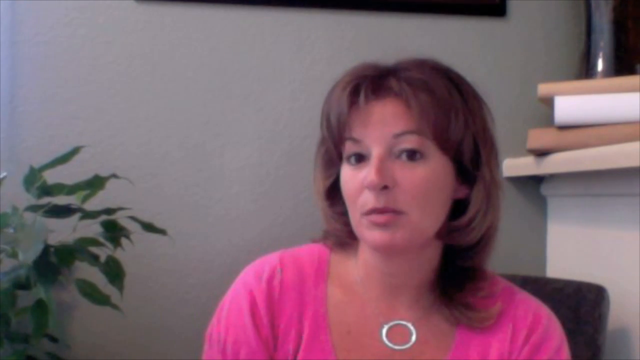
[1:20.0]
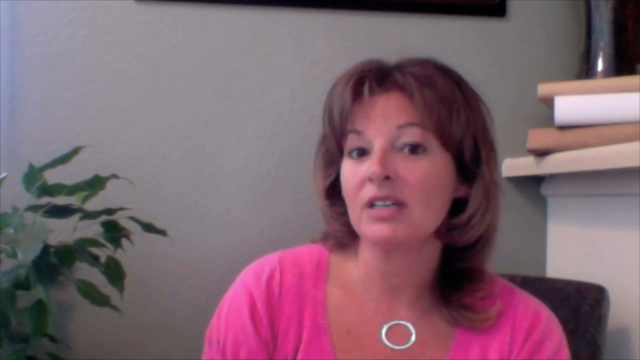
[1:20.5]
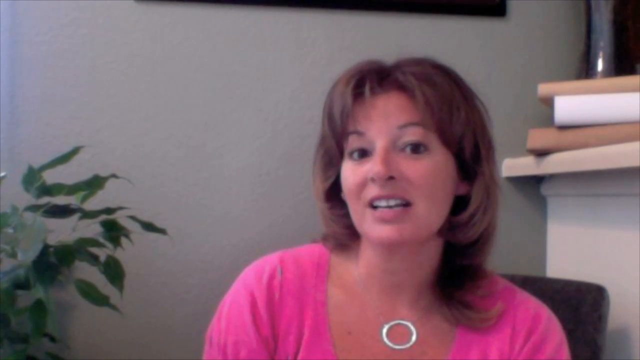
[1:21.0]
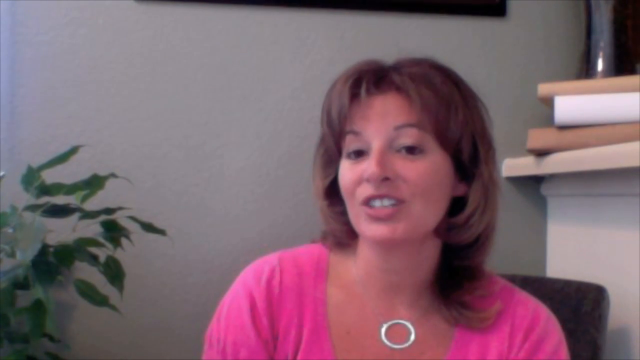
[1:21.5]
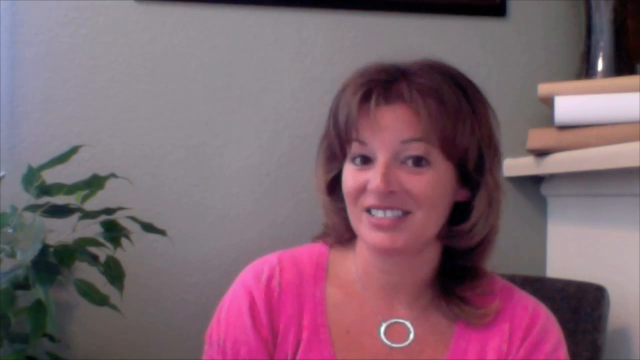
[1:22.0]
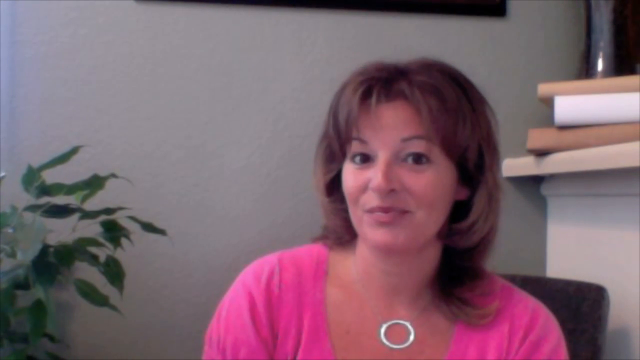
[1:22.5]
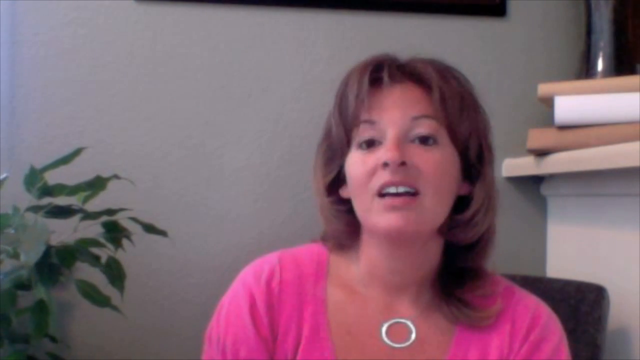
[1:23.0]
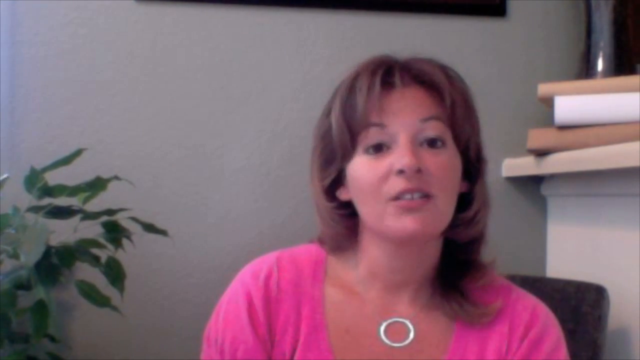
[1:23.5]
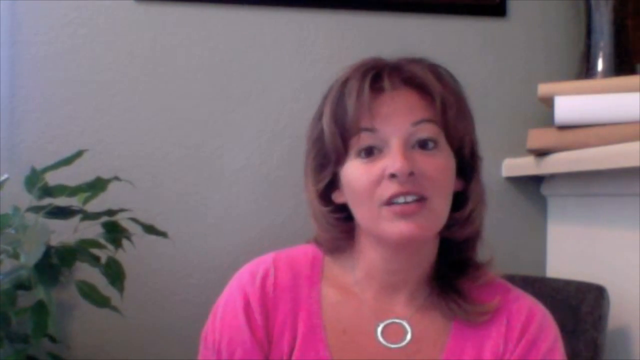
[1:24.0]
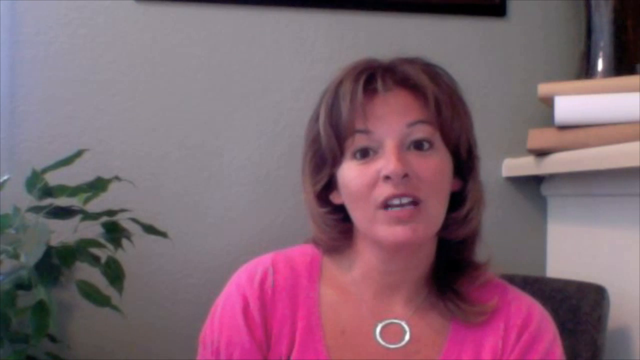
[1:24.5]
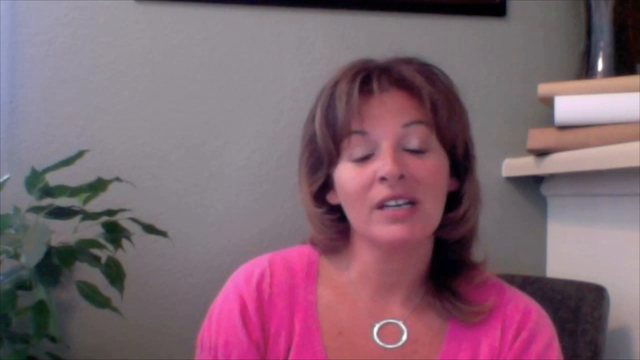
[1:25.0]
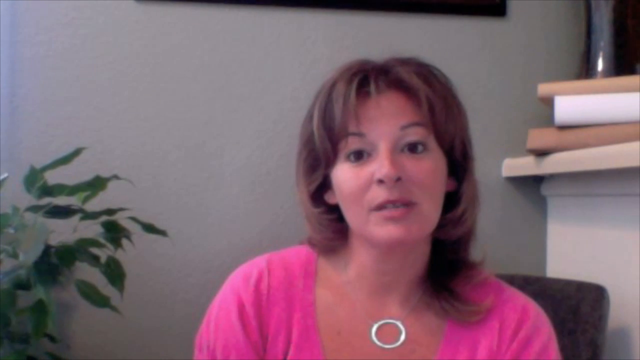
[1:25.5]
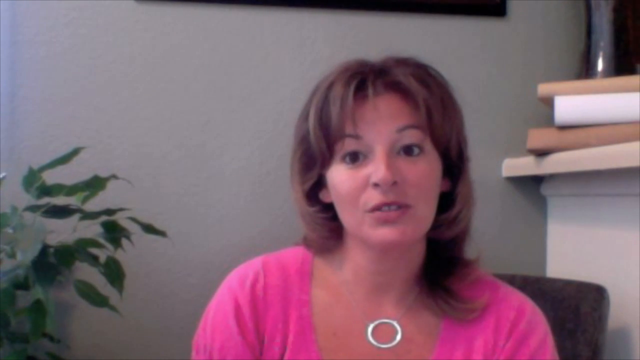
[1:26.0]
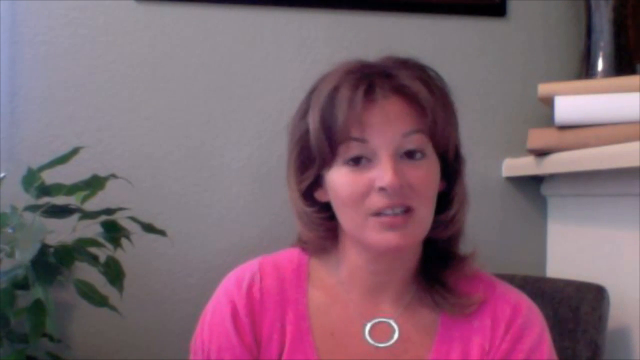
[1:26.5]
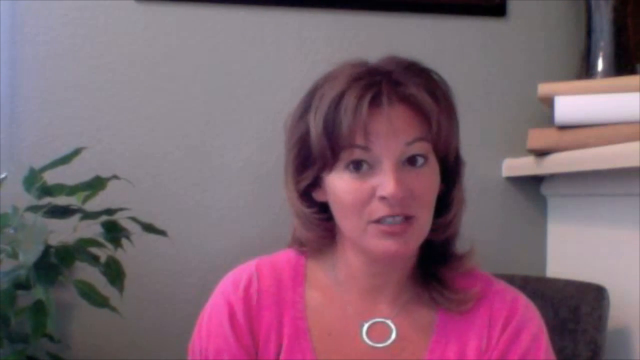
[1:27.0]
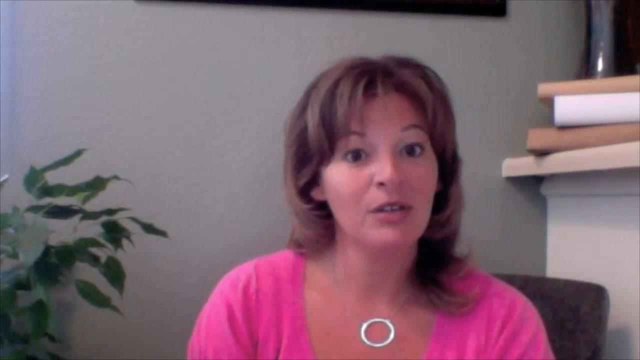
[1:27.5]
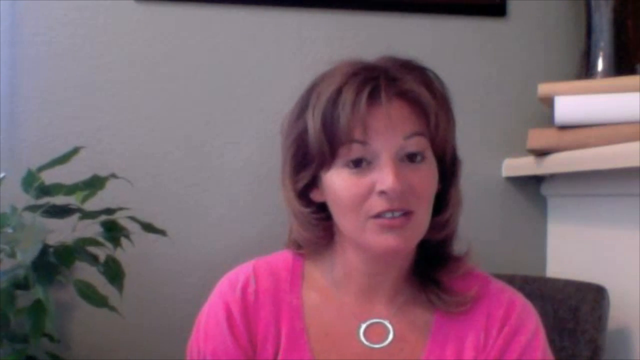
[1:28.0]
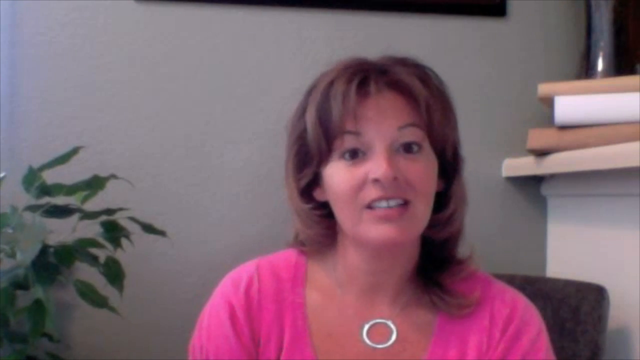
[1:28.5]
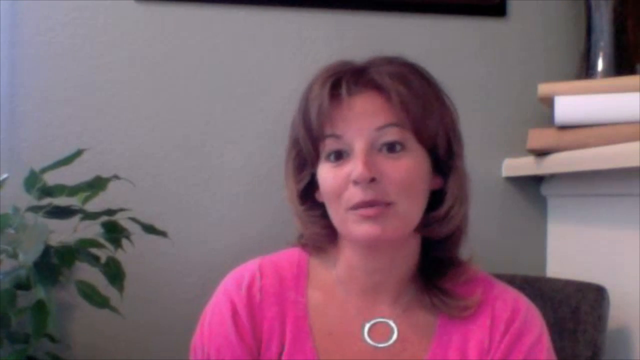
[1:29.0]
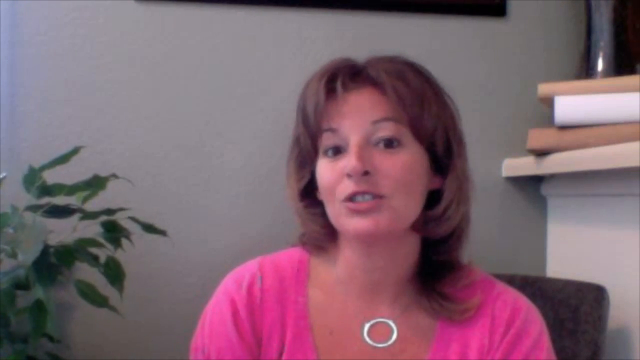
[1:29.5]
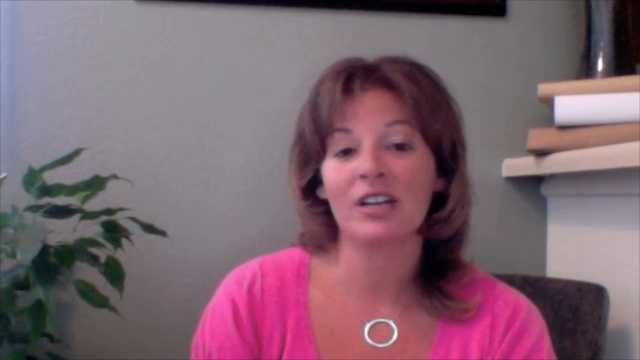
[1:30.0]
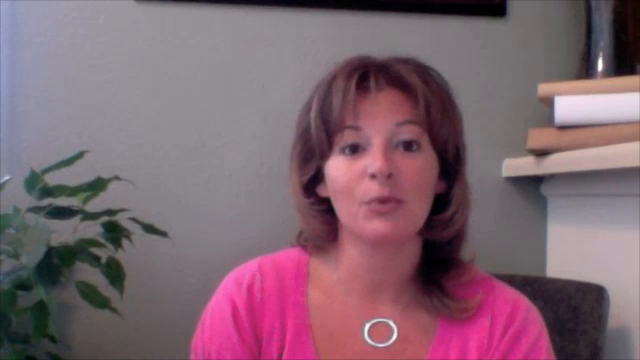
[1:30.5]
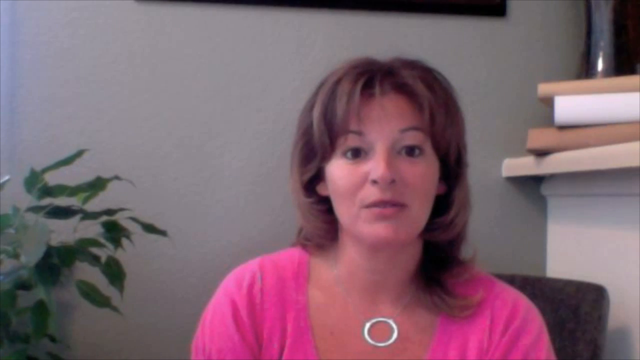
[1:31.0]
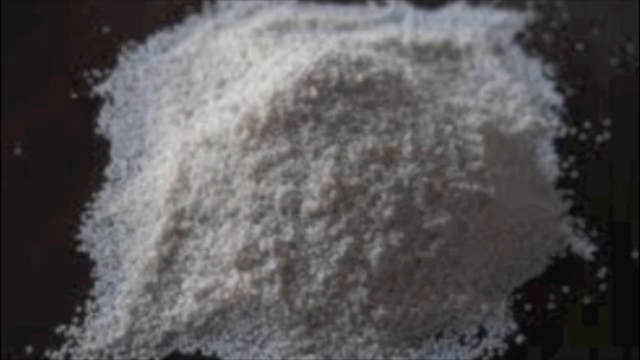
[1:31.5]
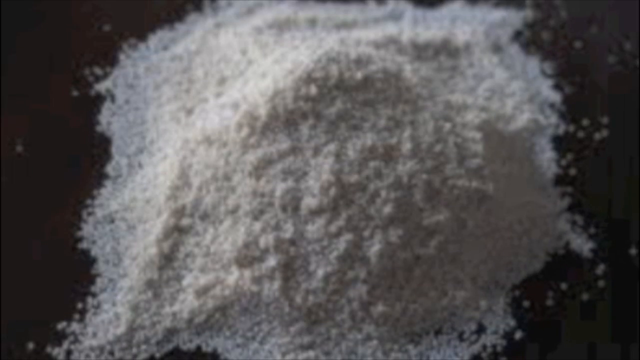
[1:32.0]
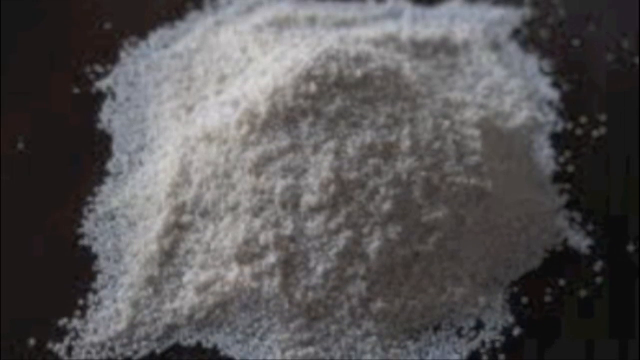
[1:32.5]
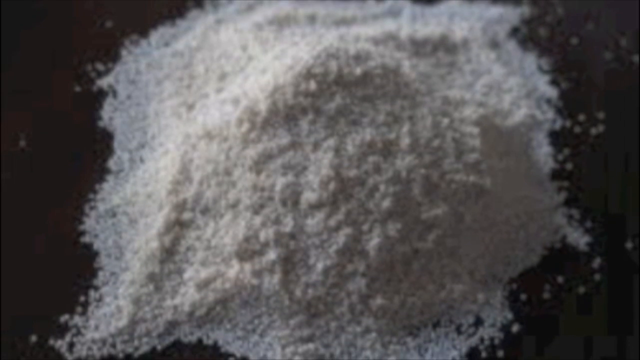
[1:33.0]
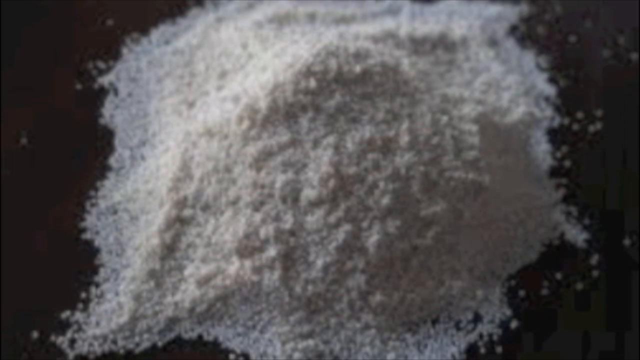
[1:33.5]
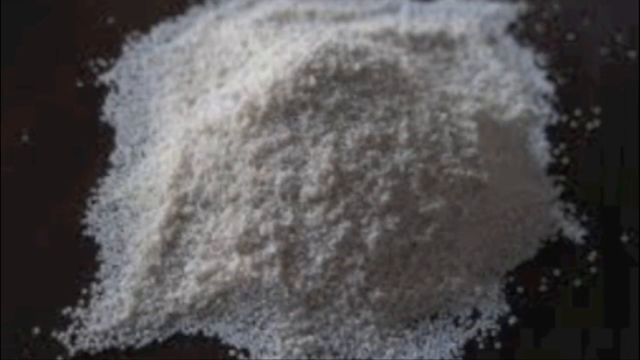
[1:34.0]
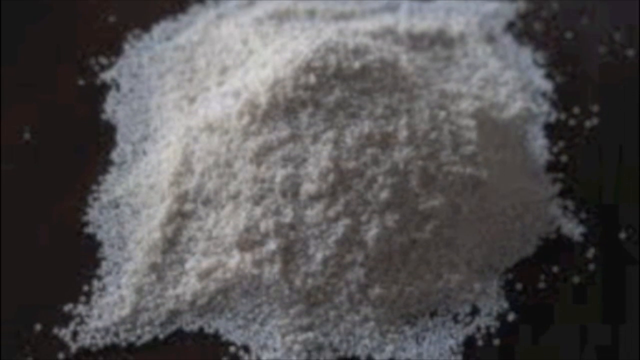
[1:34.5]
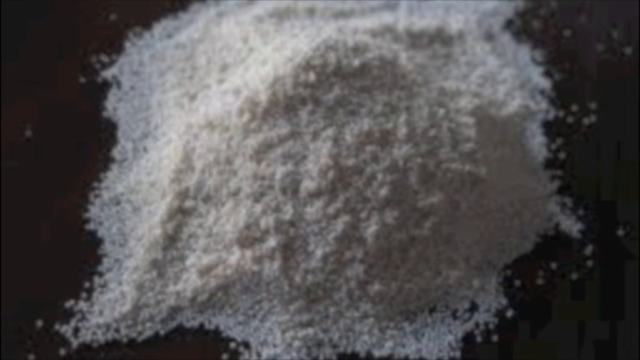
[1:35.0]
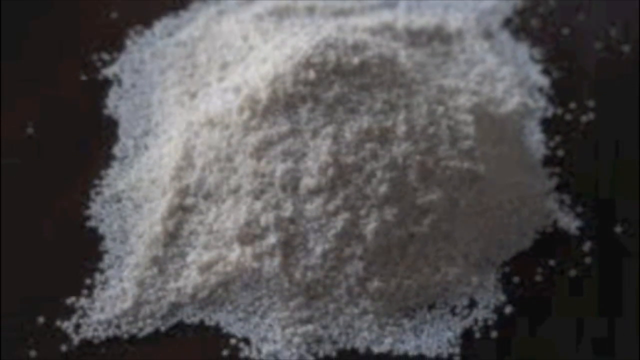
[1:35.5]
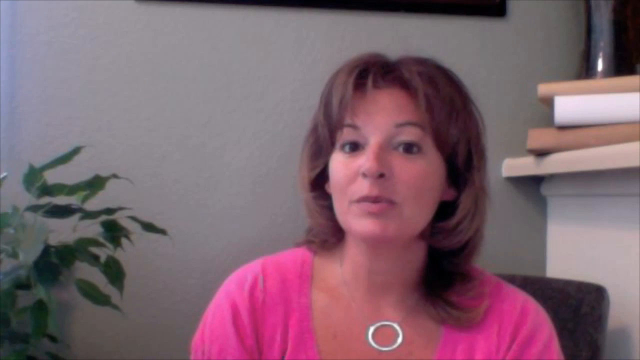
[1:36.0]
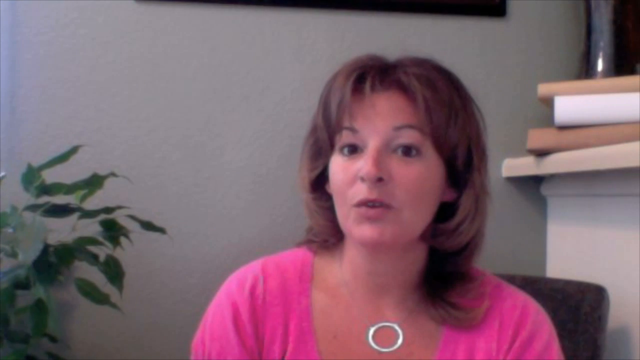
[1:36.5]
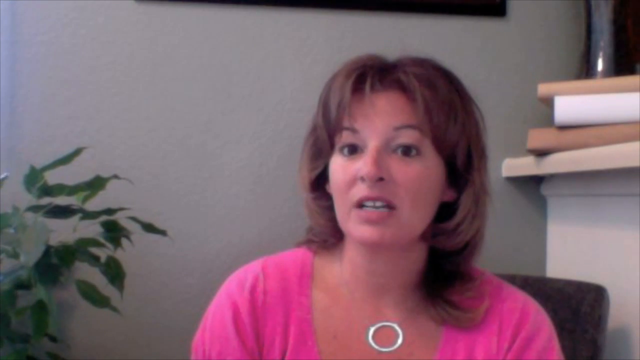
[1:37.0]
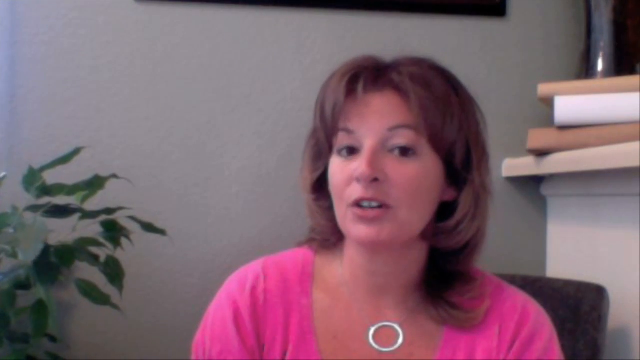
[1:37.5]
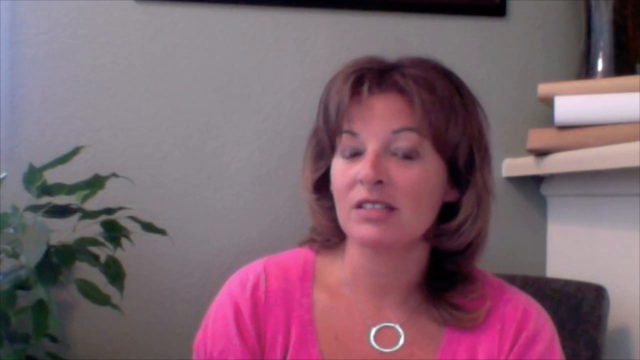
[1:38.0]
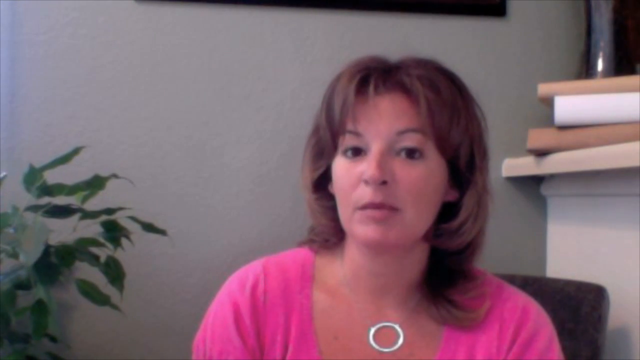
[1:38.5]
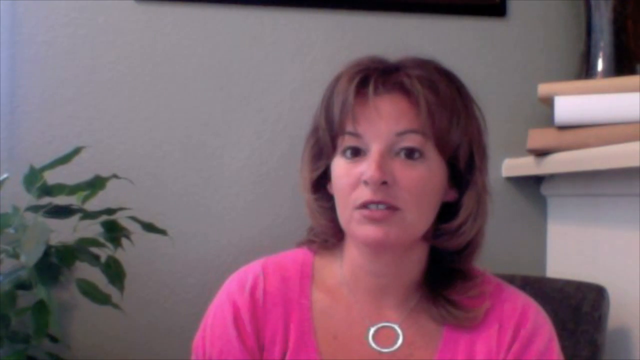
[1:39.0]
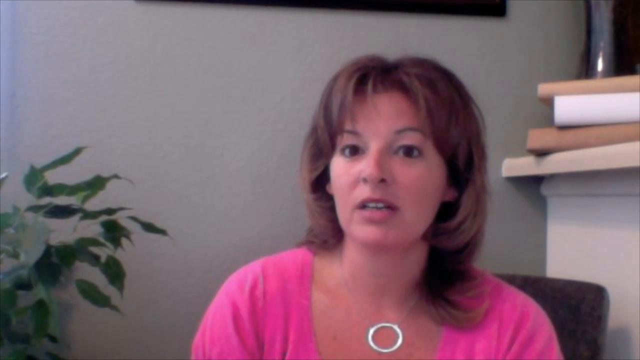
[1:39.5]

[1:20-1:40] The same woman appears, with brown hair and fair skin. Her circular necklace appears white but might be some sort of metal, and she wears the pink shirt. On her right, behind her, is the mantle or bookcase with a tan, a white and a tan book and possibly a vase. On her left is the plant, which keeps moving as she talks, probably from a fan or something. She addresses and looks at the camera. Suddenly a picture of a white powdery substance on a black background appears, going from zoomed in to panning out so more of it is visible. The video then returns to her addressing the camera.